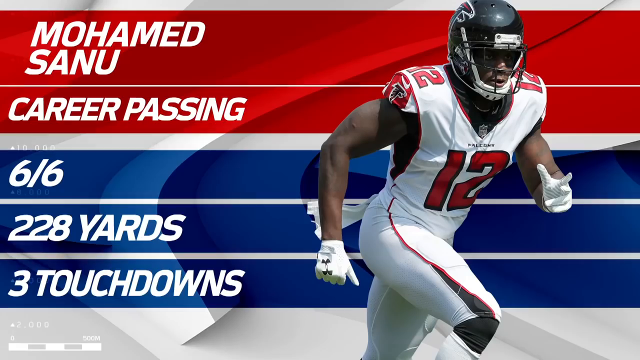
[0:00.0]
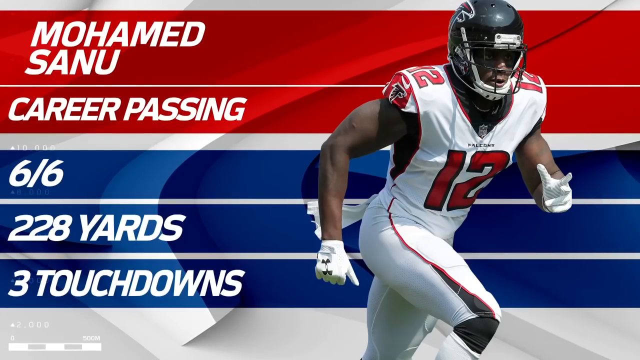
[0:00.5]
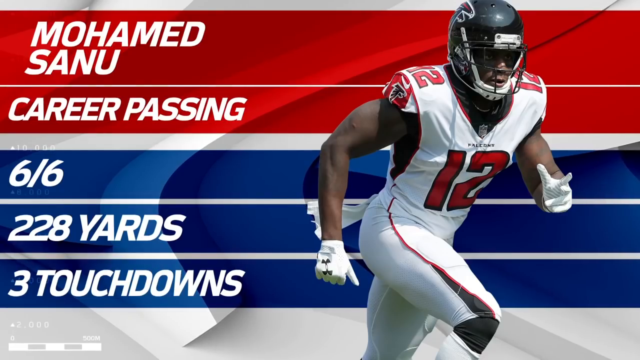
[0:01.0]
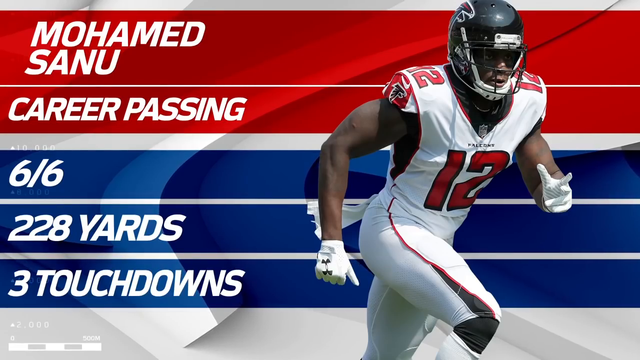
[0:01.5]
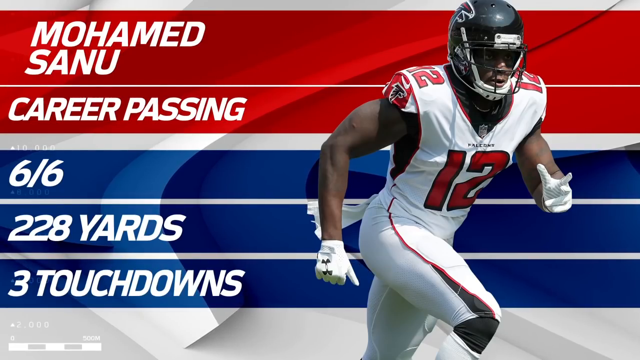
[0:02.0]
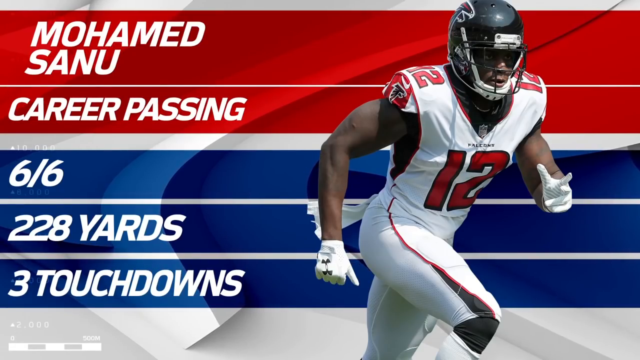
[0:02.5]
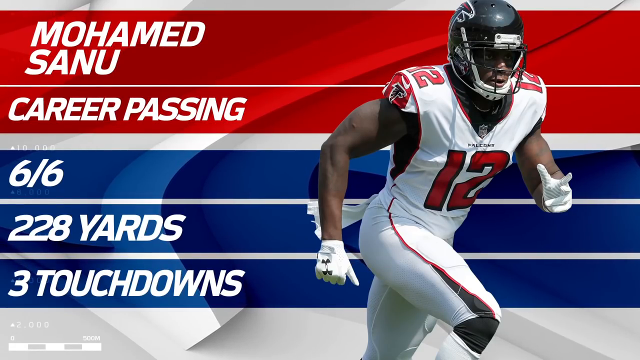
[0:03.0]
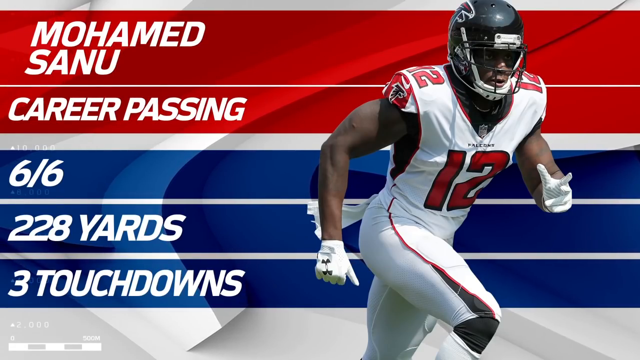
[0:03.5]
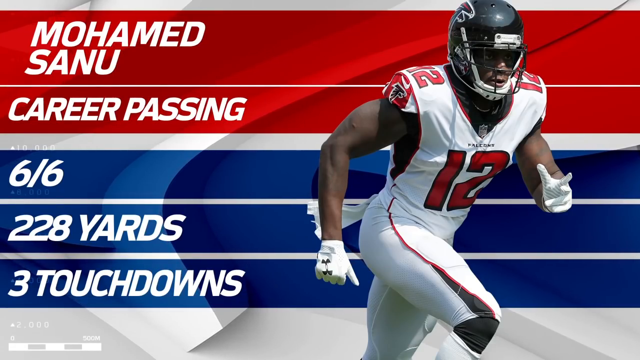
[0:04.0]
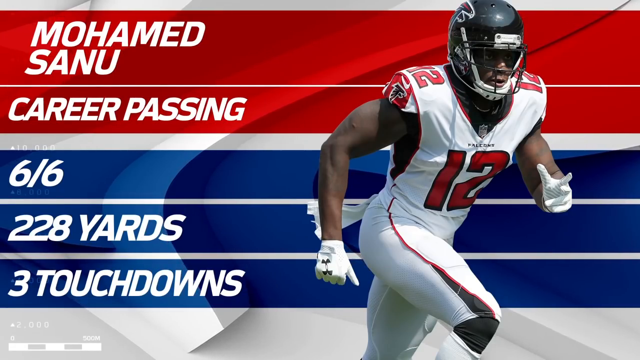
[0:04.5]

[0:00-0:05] The video opens on a graphic of Mohammed Sanu, spelled S-A-N-U, concerning career passing. In the graphic, the numbers "6/6" appear, beneath them "228 yards", and beneath that "three touchdowns". The graphic is red, white and blue, with red stripes at the top, then blue stripes, on a white background. A player, very likely Mohammed Sanu, appears in front of the graphic. He wears a white uniform with the number 12 in red on his chest and a black helmet with a bird logo, possibly an eagle or falcon head; it is the Falcons, as the word "falcons" appears just below the neckline of his uniform. At the very end, players are shown on a football field.